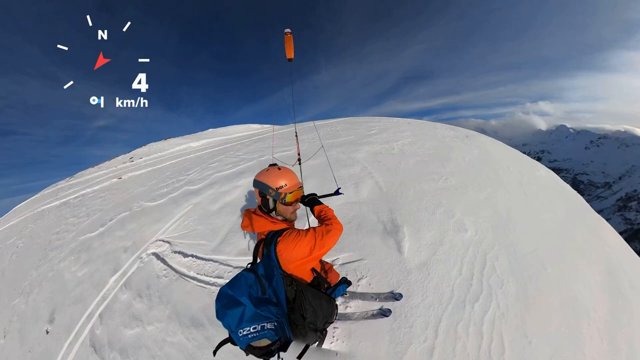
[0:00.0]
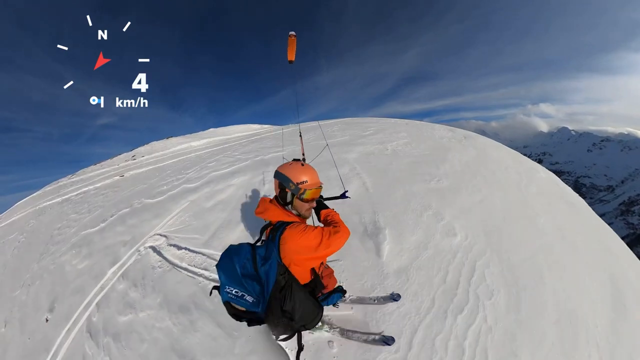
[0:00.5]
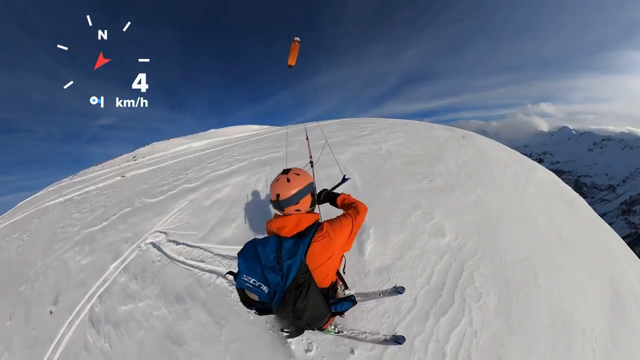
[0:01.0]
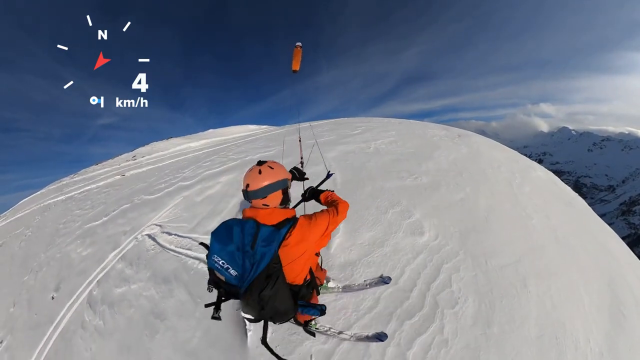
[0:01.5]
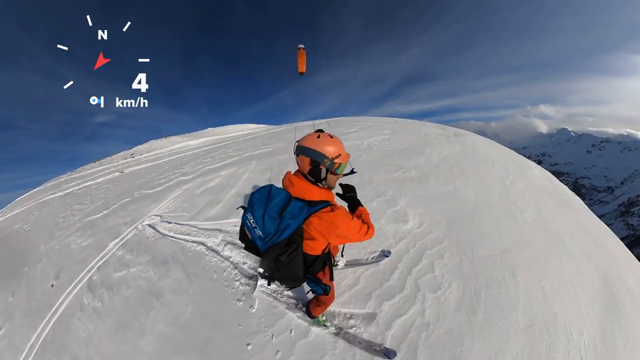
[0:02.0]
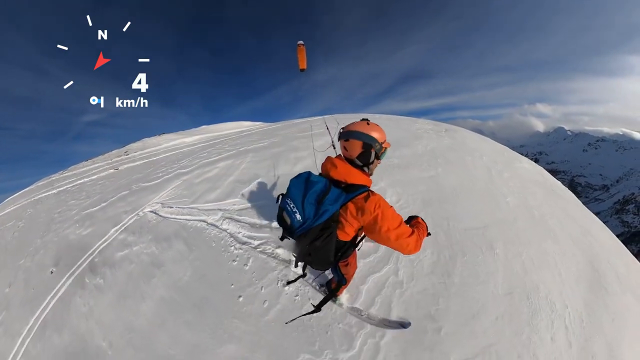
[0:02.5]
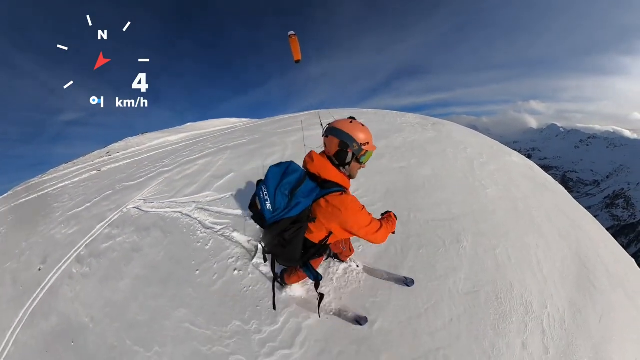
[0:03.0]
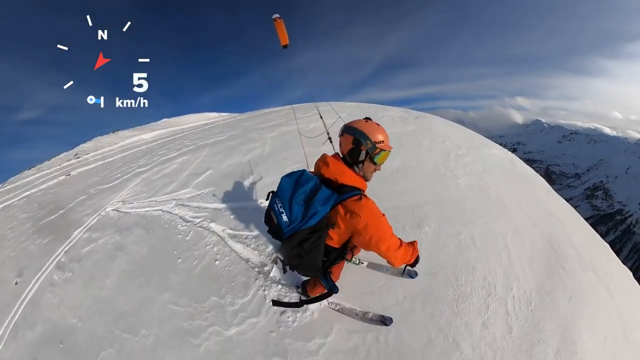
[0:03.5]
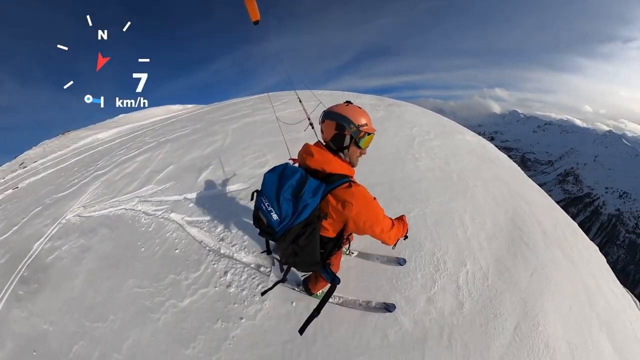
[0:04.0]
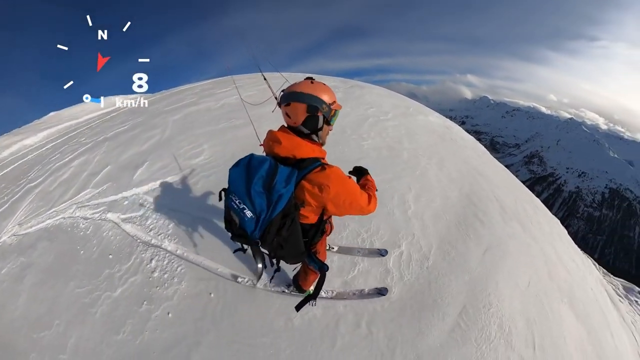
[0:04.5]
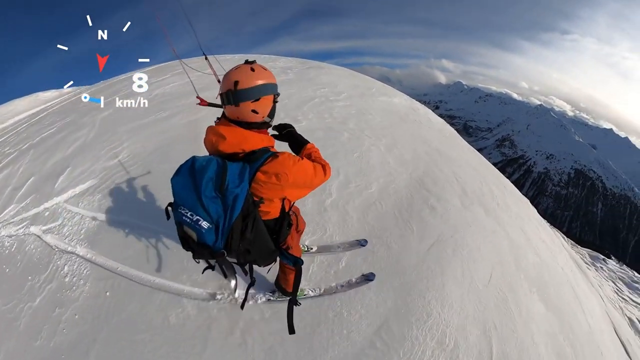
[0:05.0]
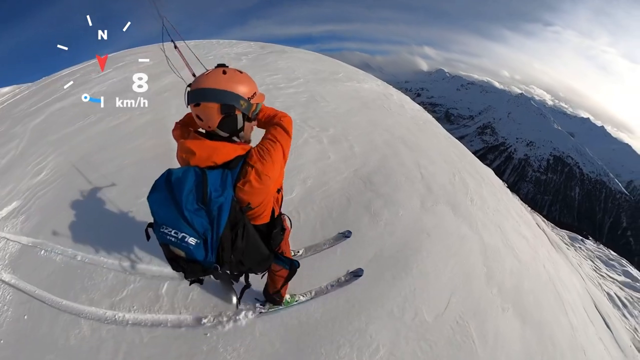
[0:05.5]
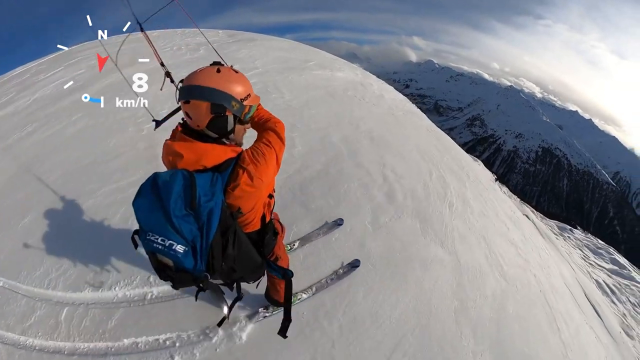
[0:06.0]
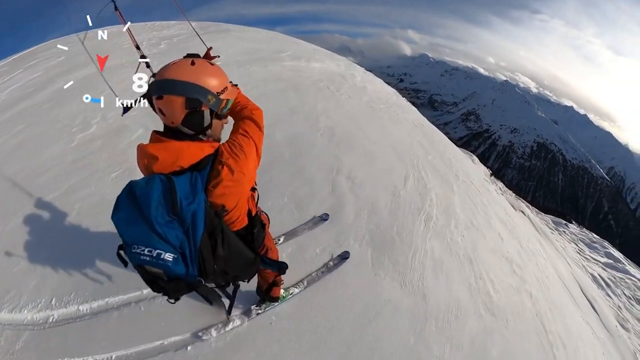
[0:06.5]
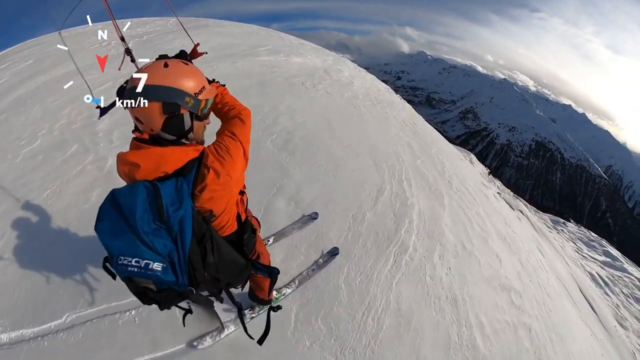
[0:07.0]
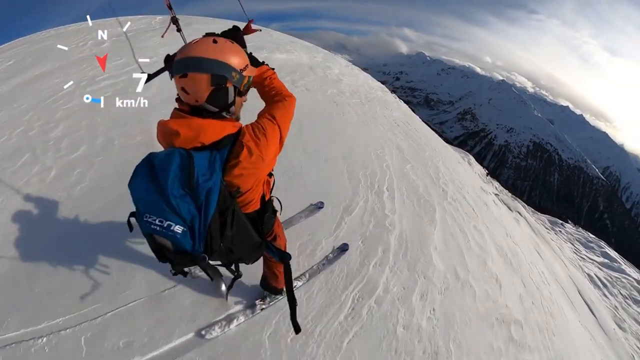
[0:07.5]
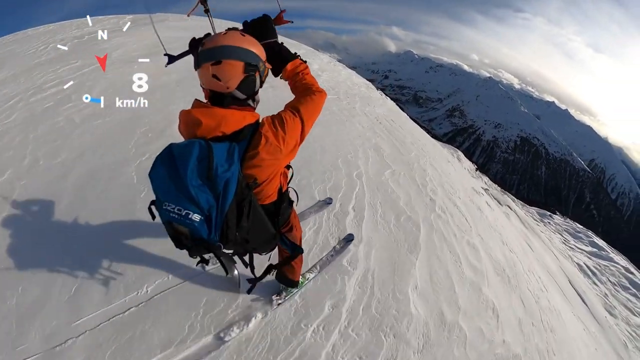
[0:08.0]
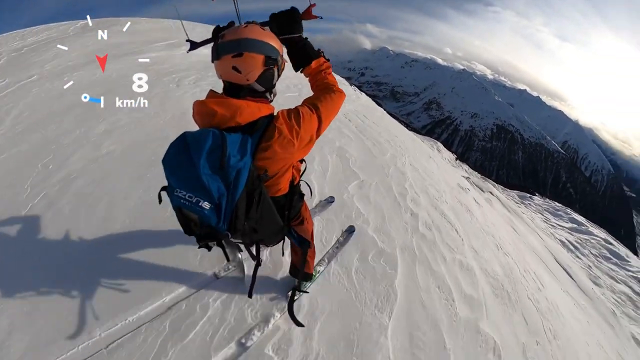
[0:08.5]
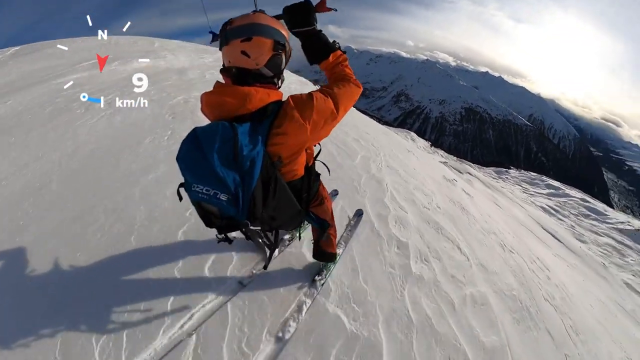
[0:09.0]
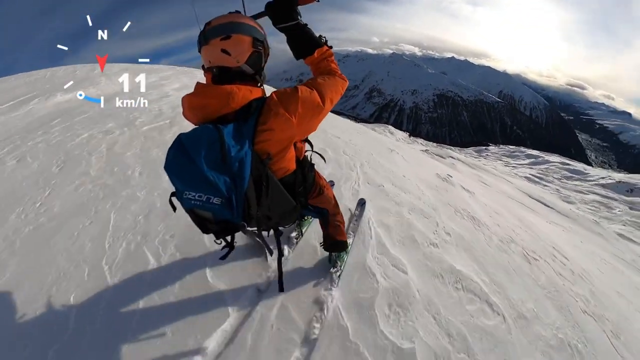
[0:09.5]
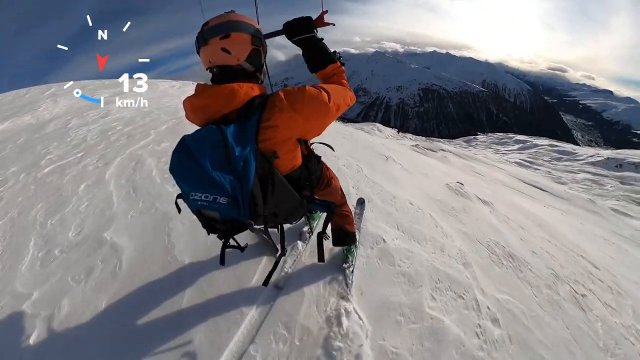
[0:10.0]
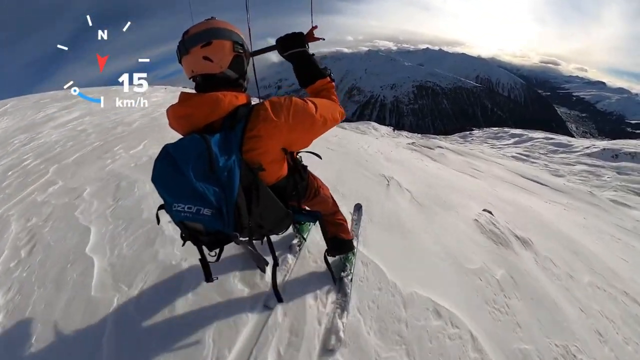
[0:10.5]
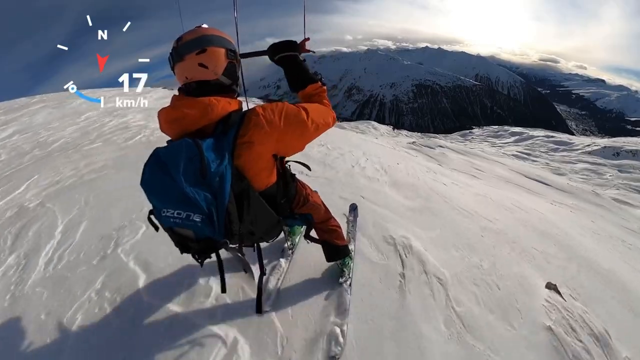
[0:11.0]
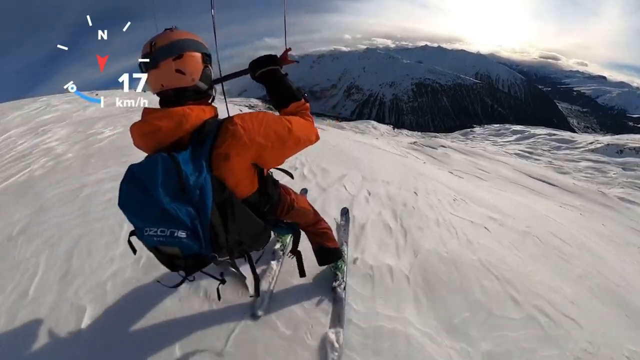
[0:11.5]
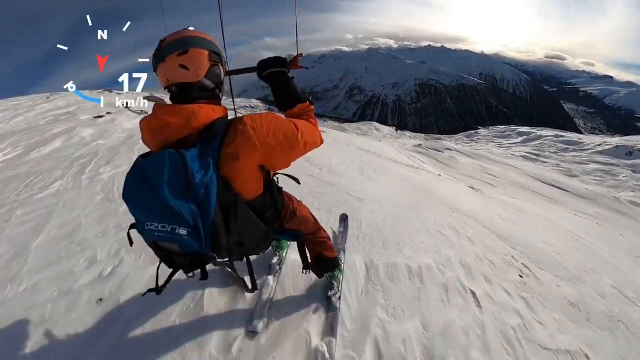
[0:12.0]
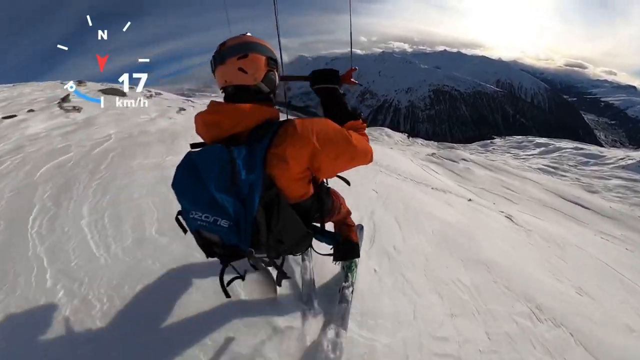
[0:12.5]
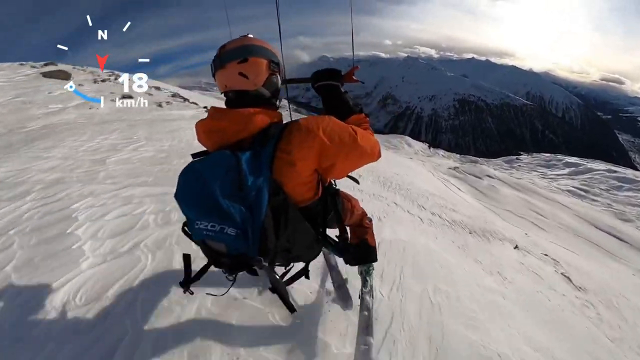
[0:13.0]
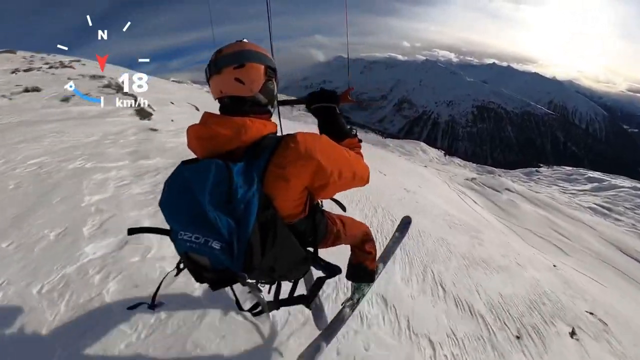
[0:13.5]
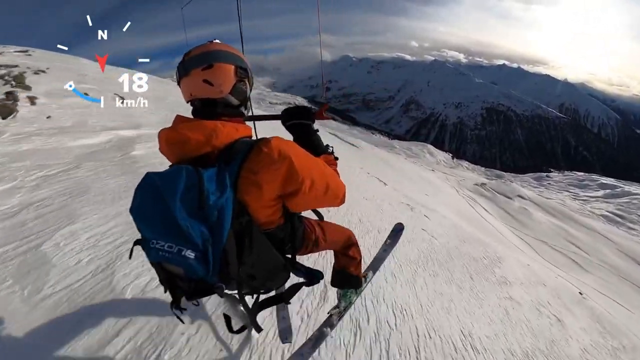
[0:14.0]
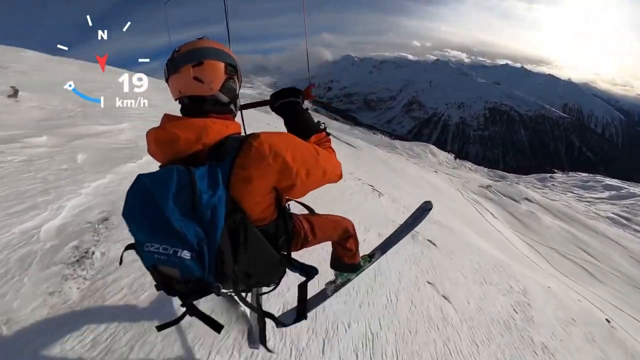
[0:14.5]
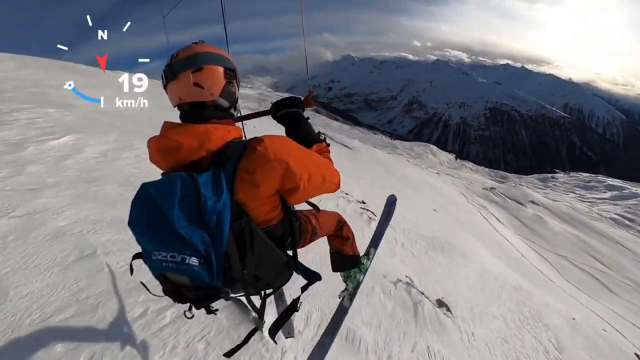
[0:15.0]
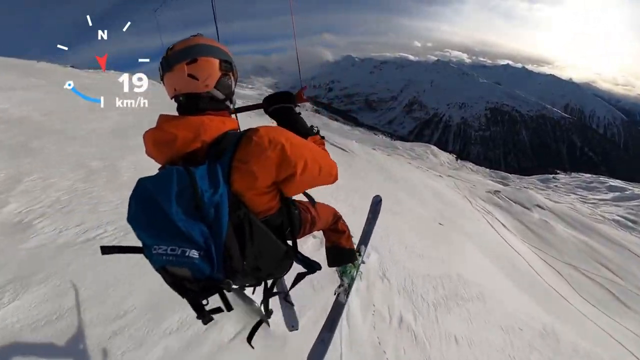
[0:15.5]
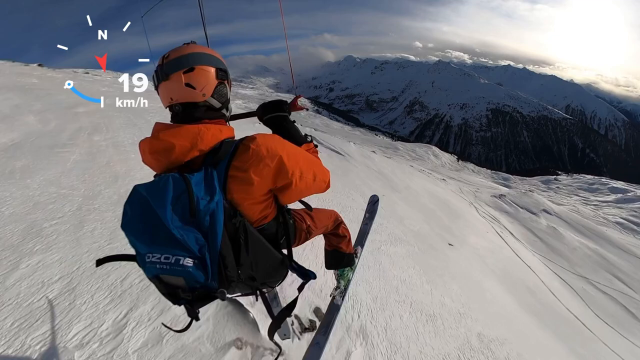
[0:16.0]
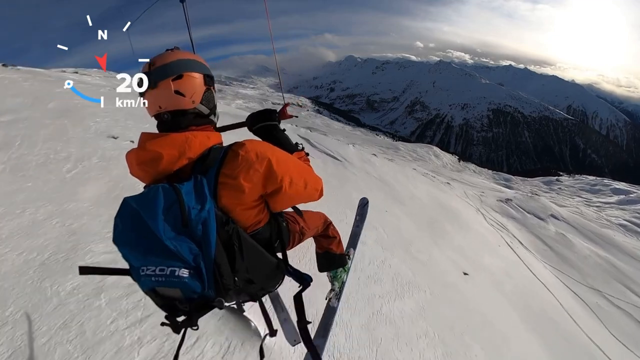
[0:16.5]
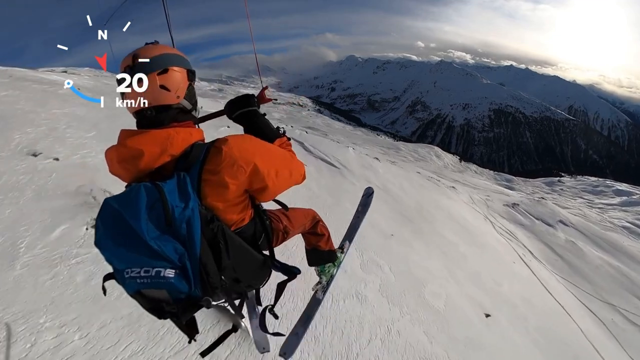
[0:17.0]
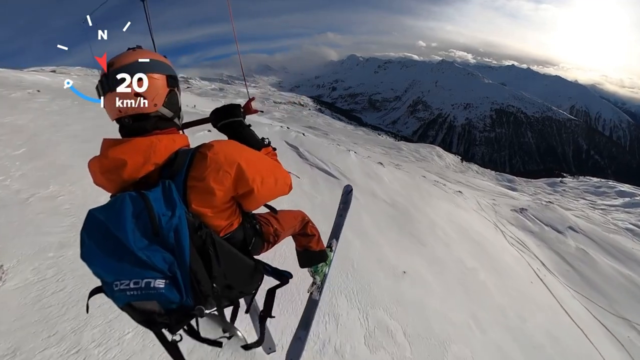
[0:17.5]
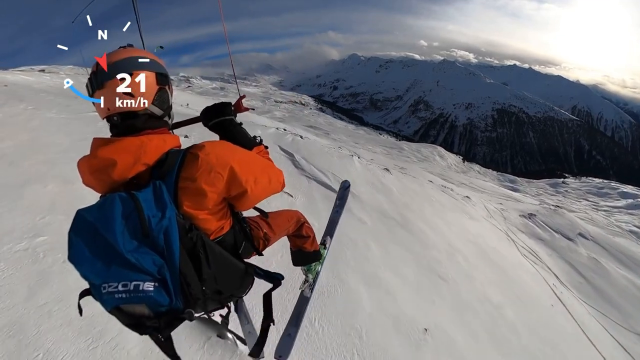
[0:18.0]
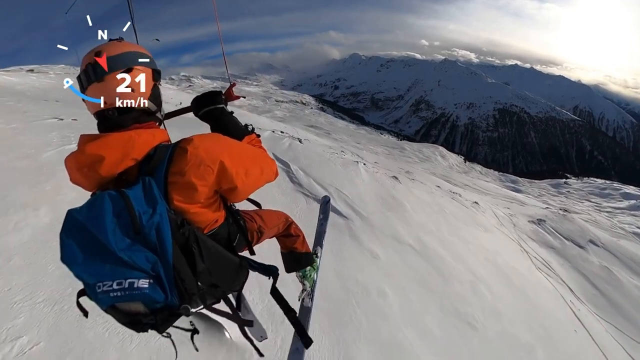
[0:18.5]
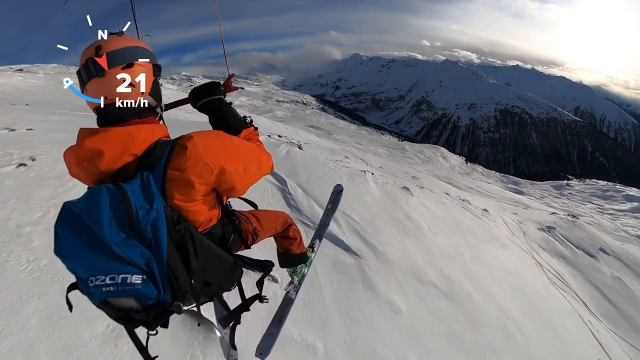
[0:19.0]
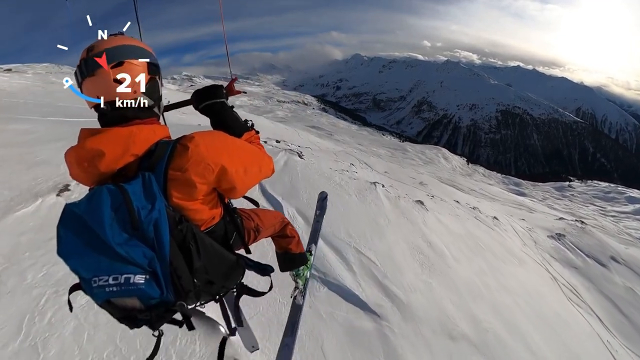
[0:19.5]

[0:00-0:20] A man is on top of a mountain or hill, skiing, filmed from a point of view apparently recorded from behind him by someone or something. He looks like he is holding on to something that helps him ski. In the top left-hand corner there is a compass pointing down to the south, along with his speed. The man starts skiing down the hill, holding on to something that is holding him. He wears a blue backpack, an orange helmet and an orange jacket. The mountaintop is seen from almost his point of view, with nothing but snow. The hill is steep, and mountains are somewhat visible in the background. As he goes down, the kilometers per hour reading starts at 4 and changes to different numbers as he moves.